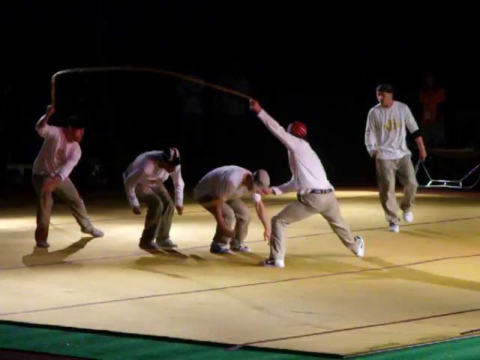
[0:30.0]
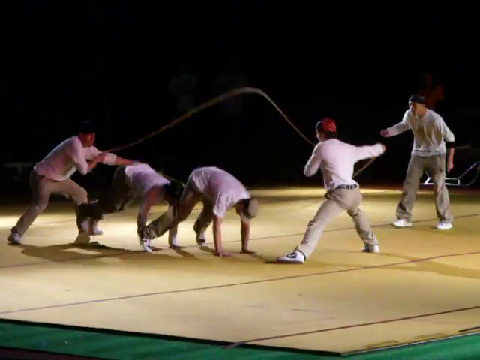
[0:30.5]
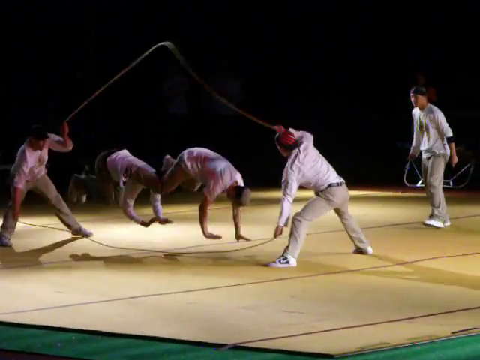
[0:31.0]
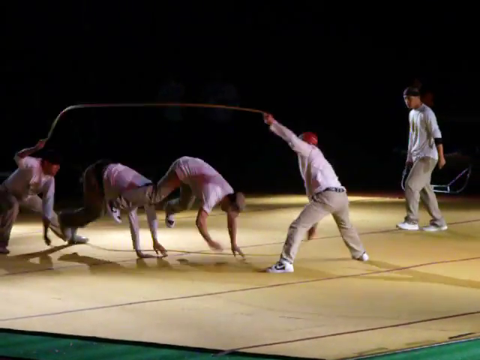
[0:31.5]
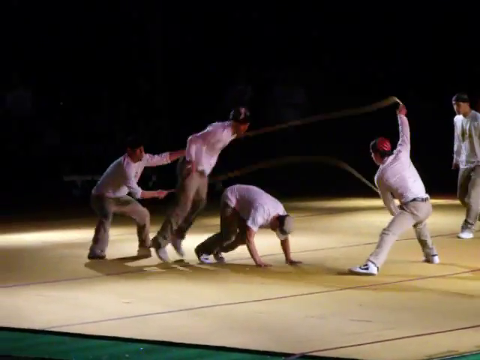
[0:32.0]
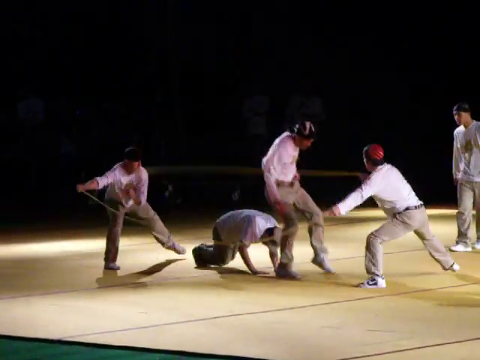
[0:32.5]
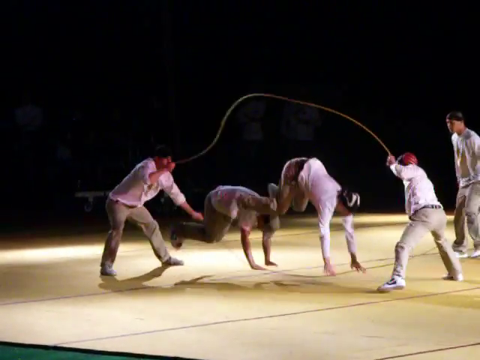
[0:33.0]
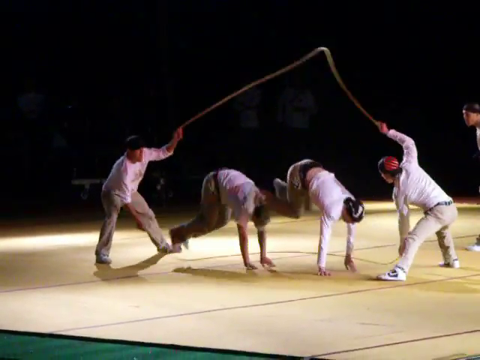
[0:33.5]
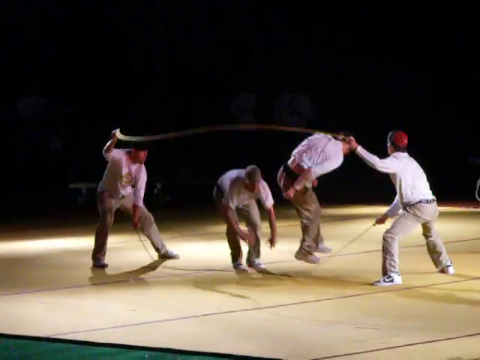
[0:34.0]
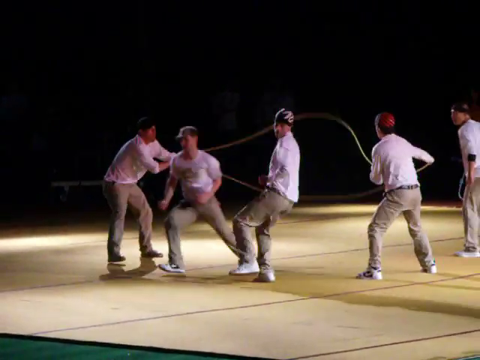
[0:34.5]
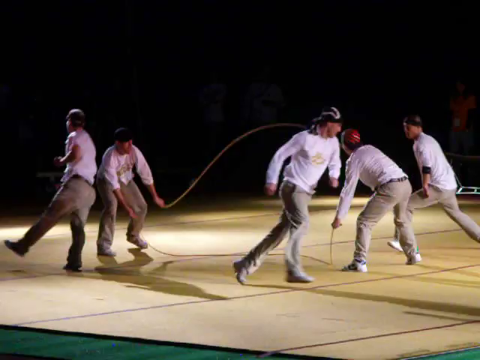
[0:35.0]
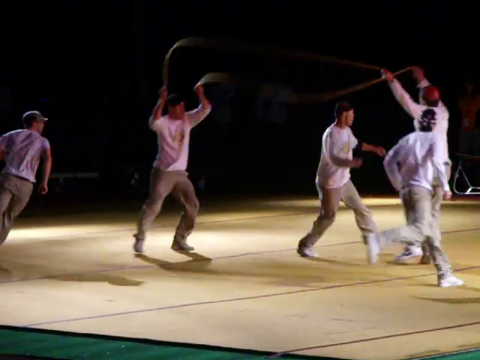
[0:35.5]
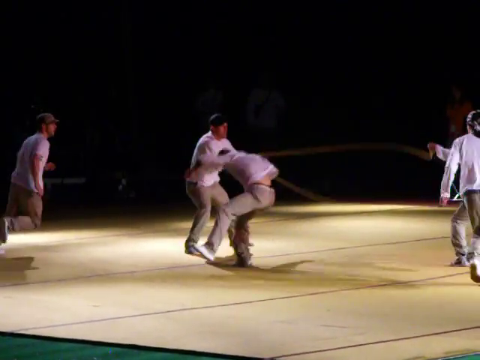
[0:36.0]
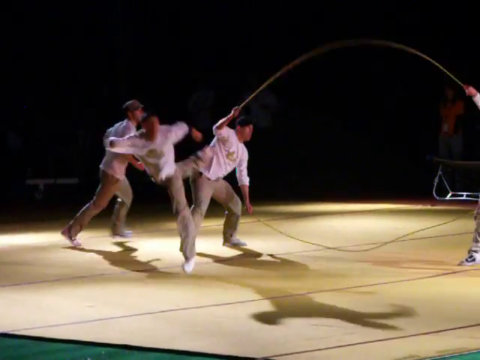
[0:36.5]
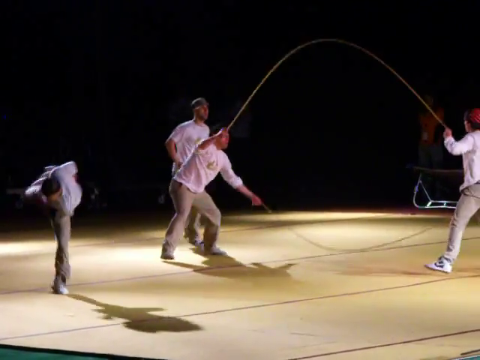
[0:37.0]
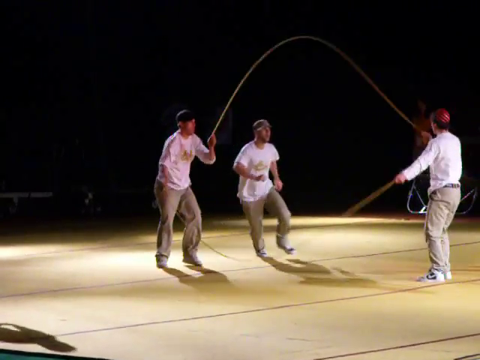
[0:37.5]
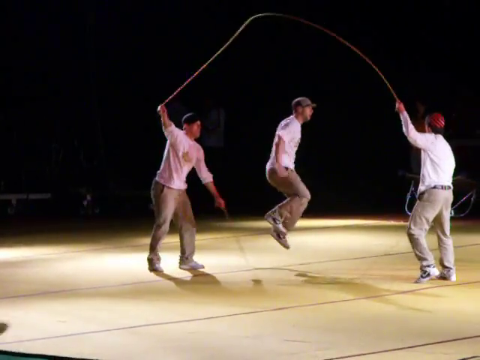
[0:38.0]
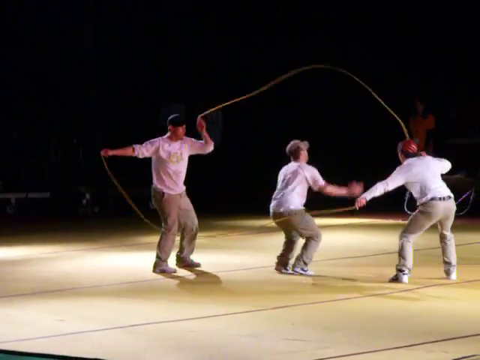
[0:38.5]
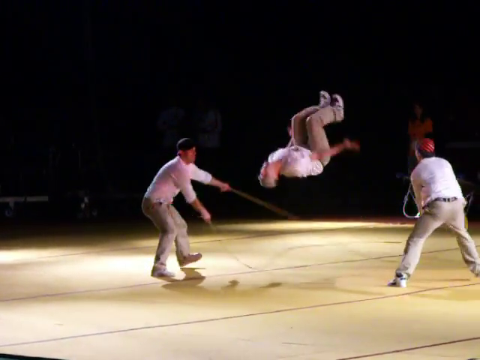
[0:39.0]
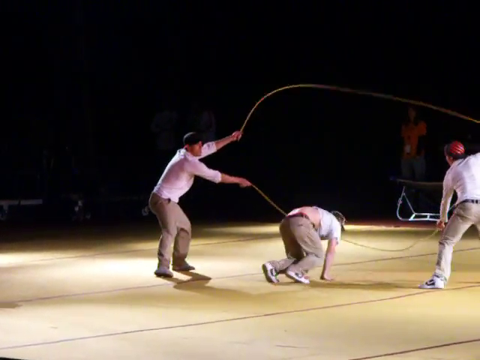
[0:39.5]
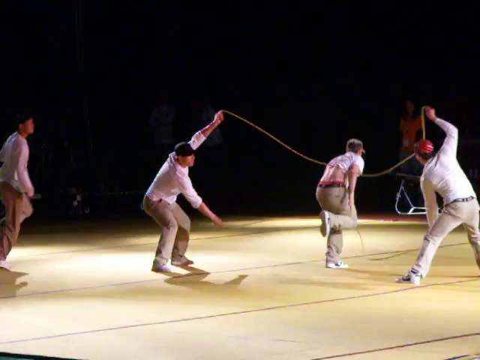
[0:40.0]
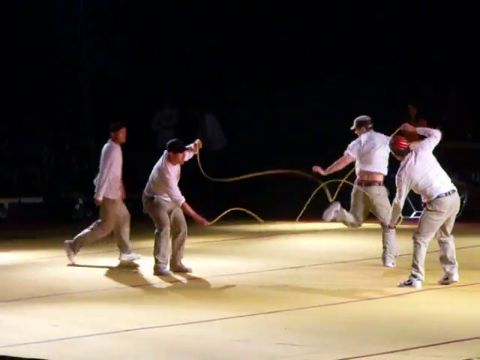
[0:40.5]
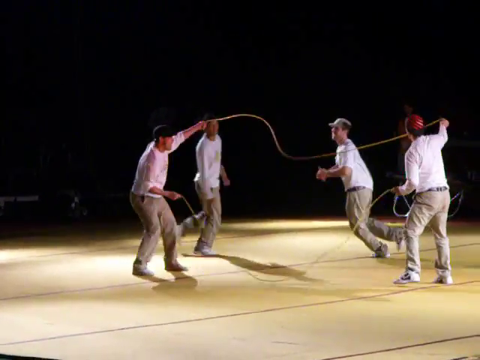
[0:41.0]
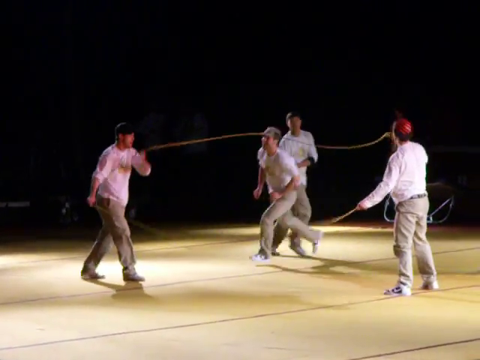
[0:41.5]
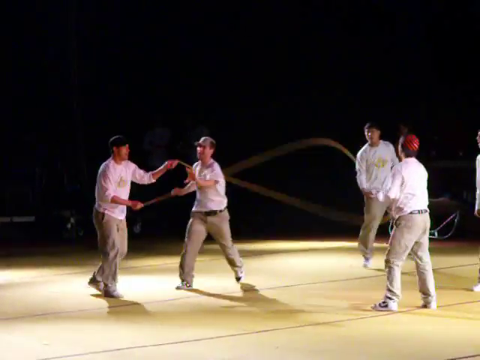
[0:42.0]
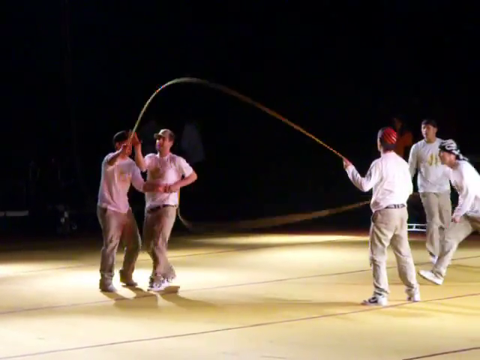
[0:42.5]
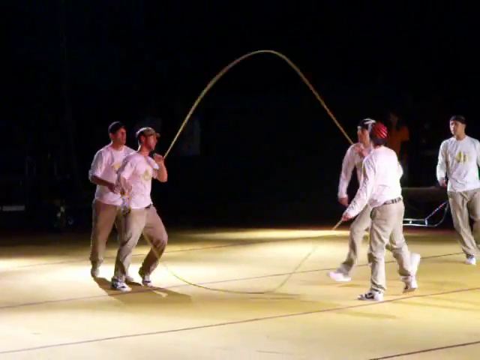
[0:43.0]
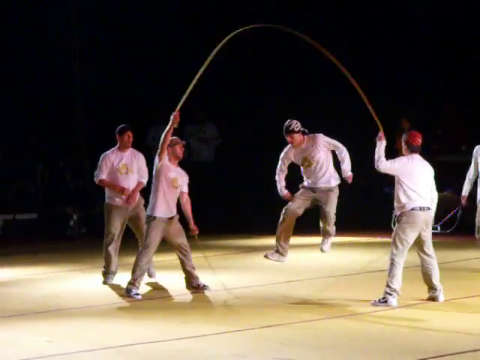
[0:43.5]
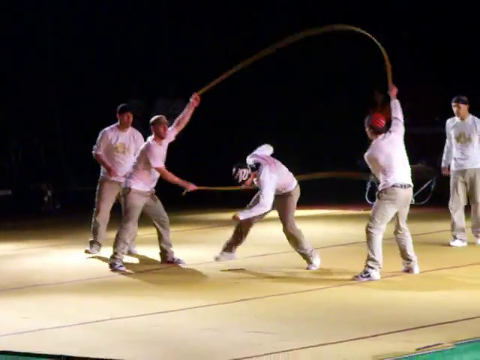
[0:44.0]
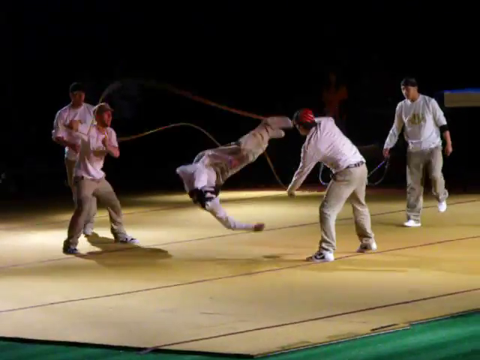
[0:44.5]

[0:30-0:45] Both performers get on all fours, then one gets into a kind of plank position and puts his legs up on the other's shoulders, and they switch places and change positions. Both go out and another teammate comes in to do a backflip. He gets his foot a little caught on the rope as he goes out, then switches out with one of the people controlling the jump ropes. The last trick seems to involve a kind of aerial move before apparently going to the ground again, and that teammate lands on his back. He wears a black and white cap backwards. Everyone on the team seems to have a different style of cap: one is red, one is a kind of beige color. Throughout these moves, the ropes sometimes stop moving in tandem, and sometimes one rope seems to be spun by itself for emphasis without anyone jumping.